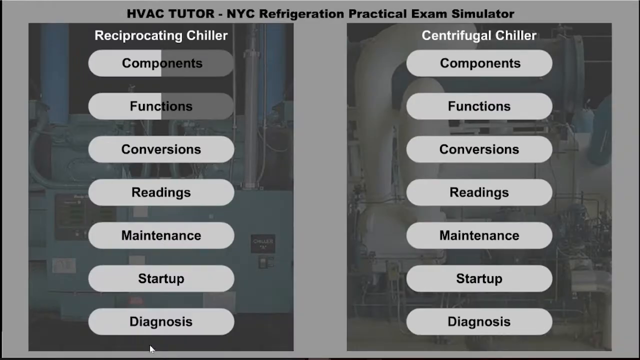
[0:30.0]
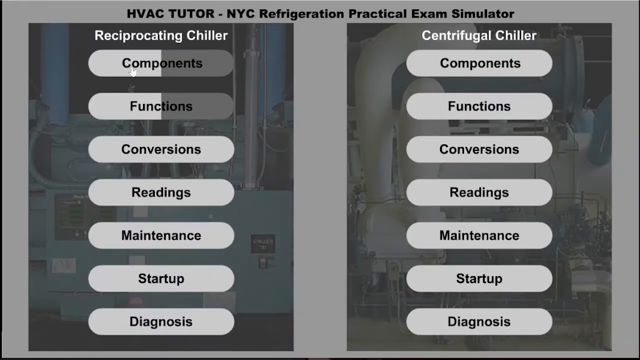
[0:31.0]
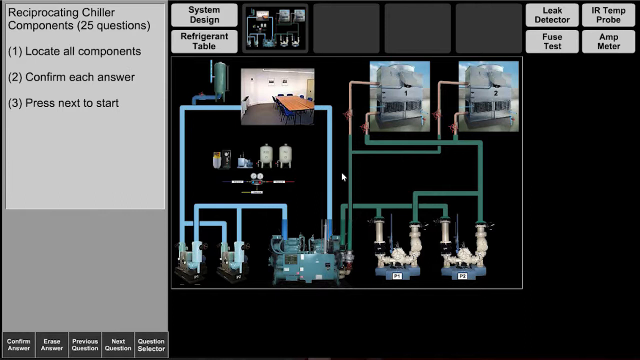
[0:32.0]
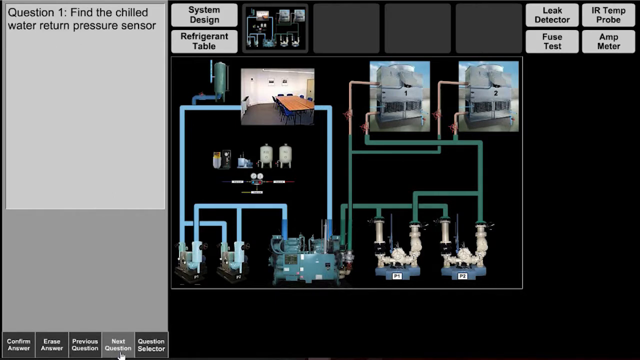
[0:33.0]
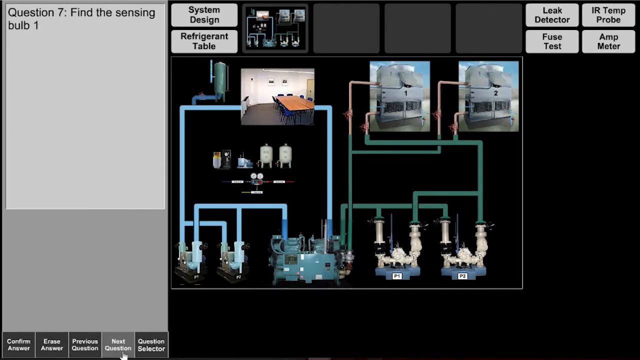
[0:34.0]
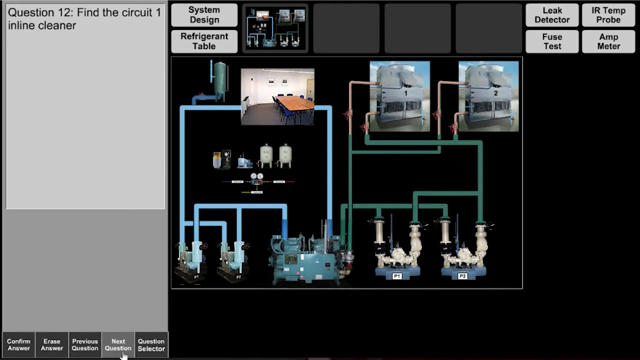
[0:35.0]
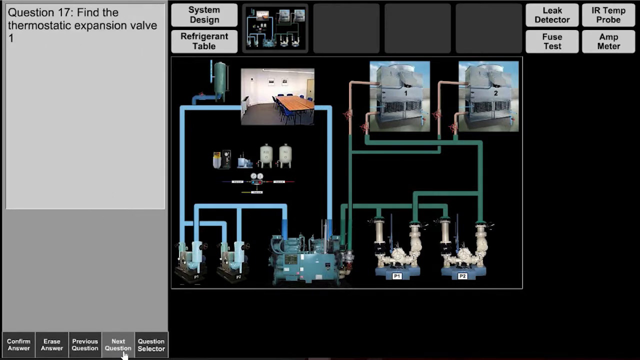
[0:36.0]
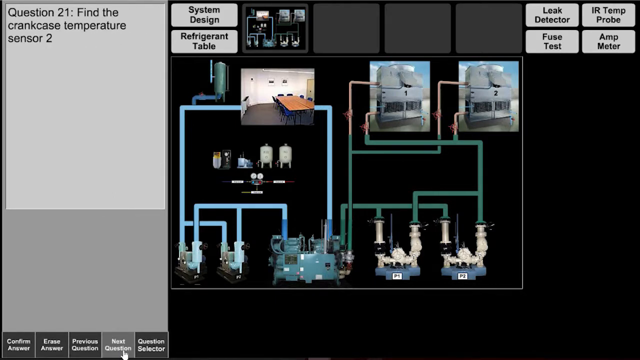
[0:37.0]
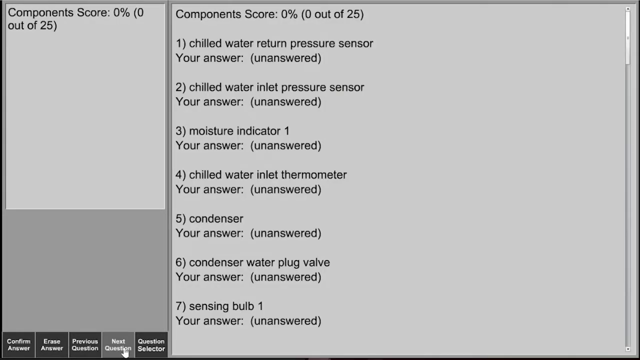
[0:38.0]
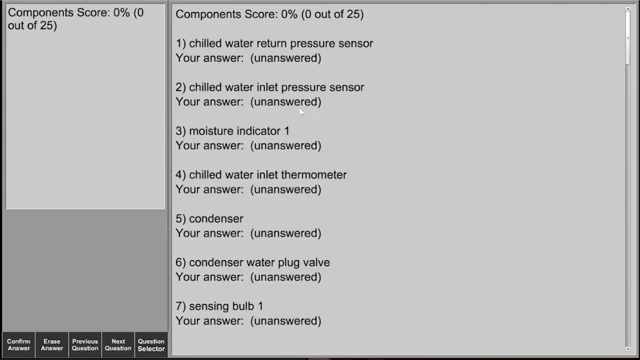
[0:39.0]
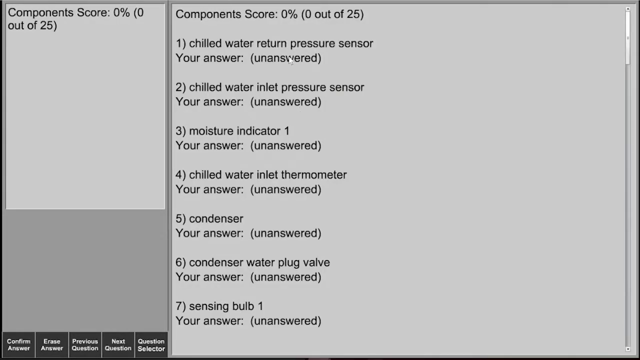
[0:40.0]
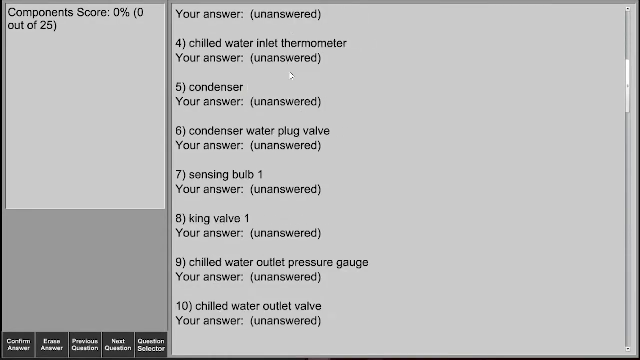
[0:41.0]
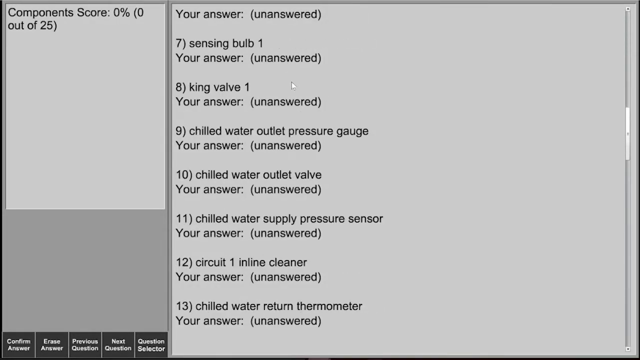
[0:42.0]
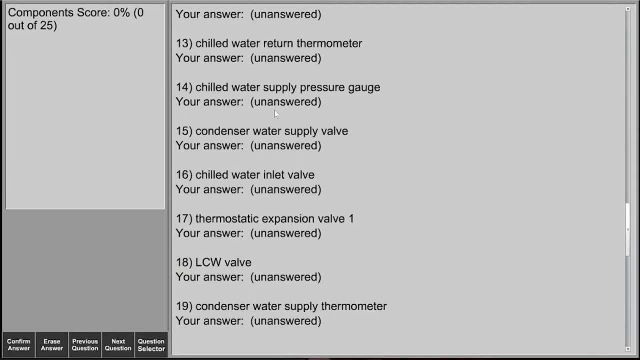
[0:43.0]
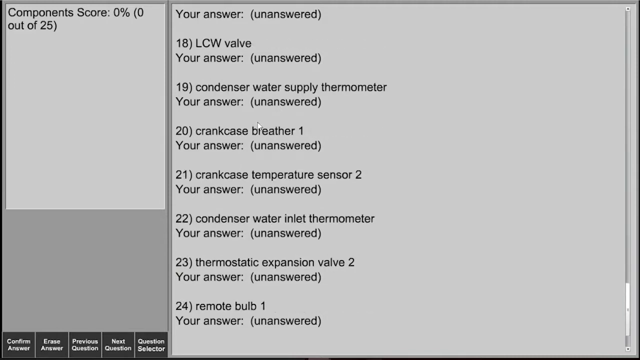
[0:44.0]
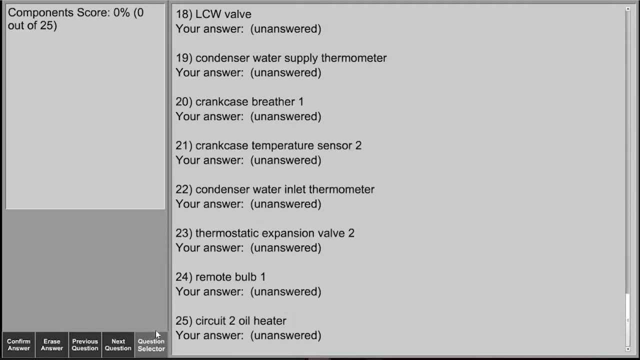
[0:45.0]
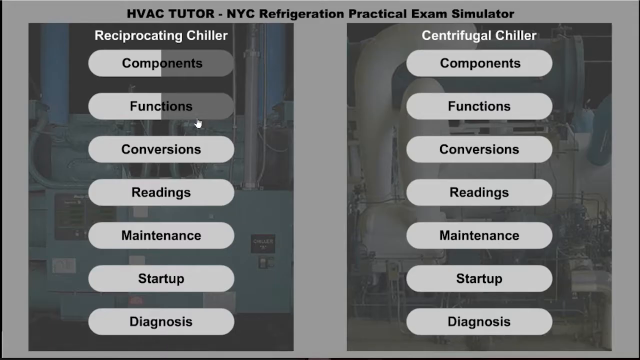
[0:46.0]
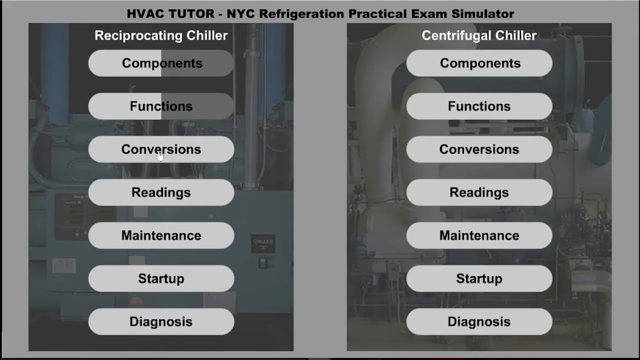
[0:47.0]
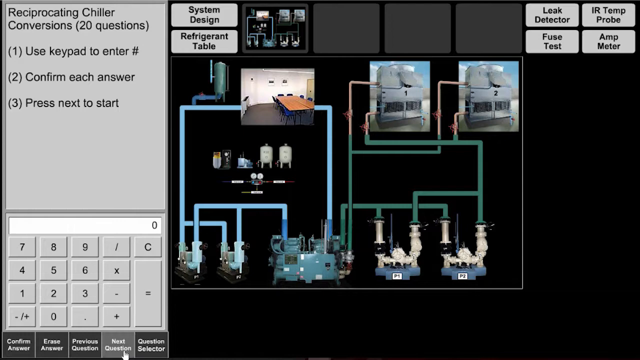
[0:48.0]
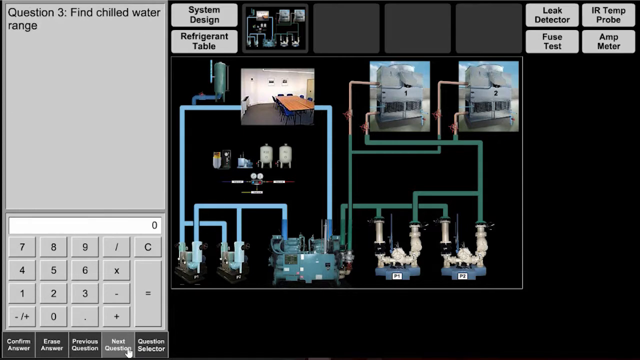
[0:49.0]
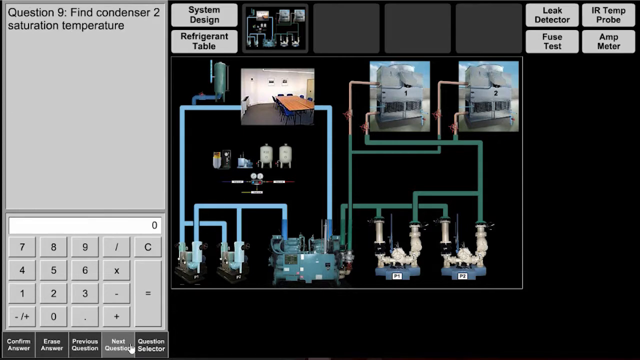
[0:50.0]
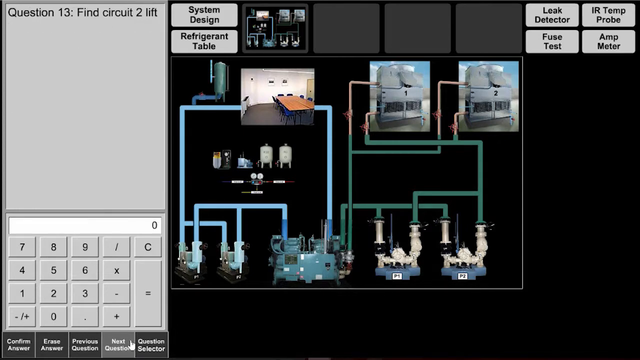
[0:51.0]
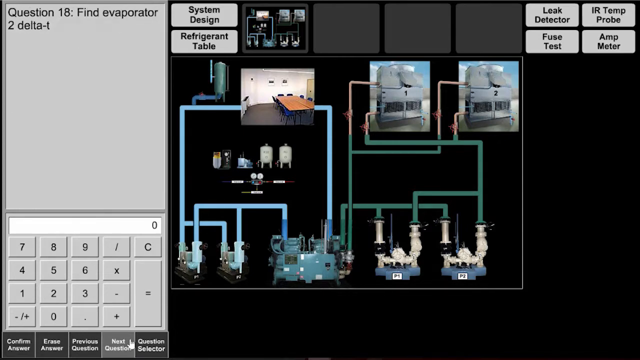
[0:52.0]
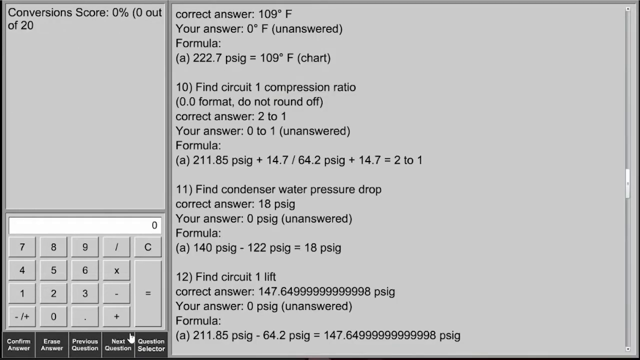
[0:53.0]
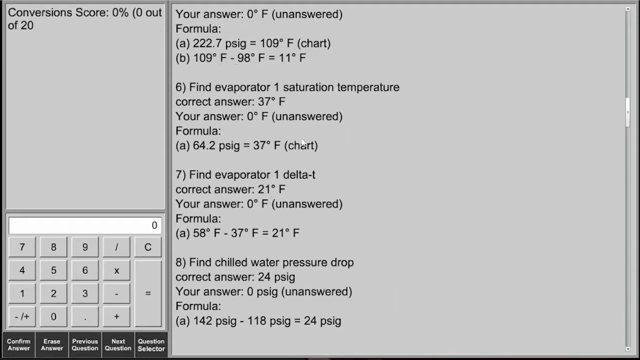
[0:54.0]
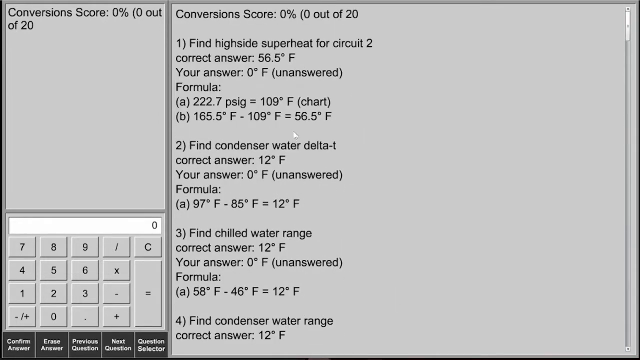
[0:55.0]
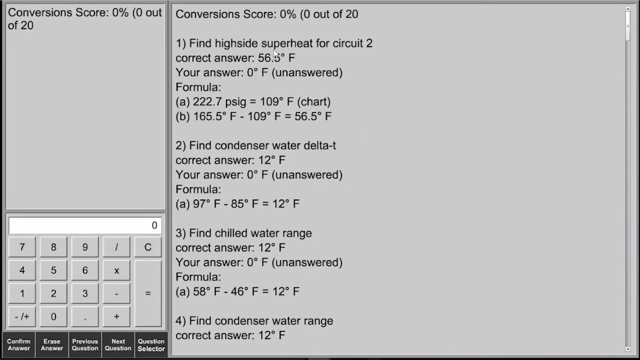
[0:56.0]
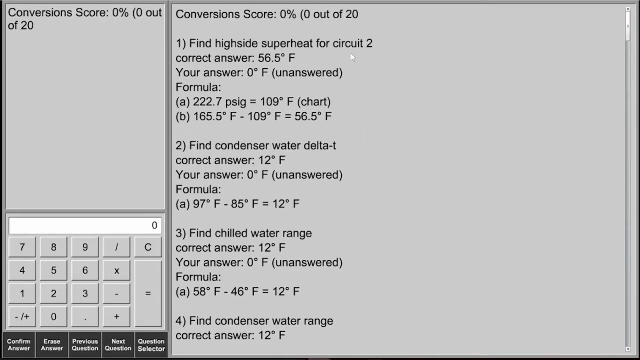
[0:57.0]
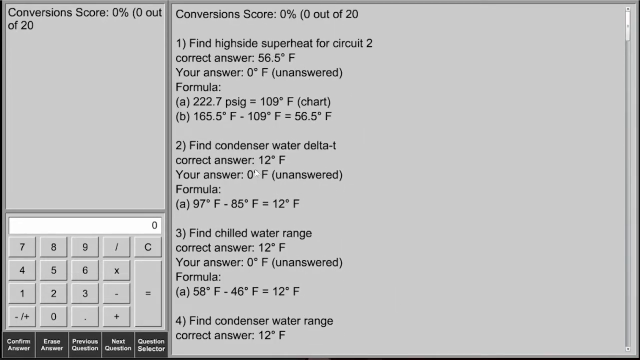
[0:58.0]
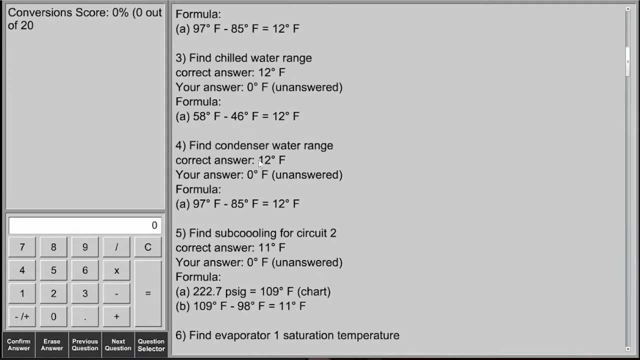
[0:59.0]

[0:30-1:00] A two-column screen is shown, with "HVAC tutor - NYC refrigeration, practical exam simulator" at the top. The left column lists items under the title "reciprocating chiller": components function, conversions, readings, maintenance, startup, diagnosis and so on. Components and functions is half finished, while the rest show incomplete. The right column shows "Centrifugal chiller" with the same buttons, also showing as incomplete. The user clicks the components button under Reciprocating Chiller and scrolls through 25 questions. The Components score then appears as "0% (0 out of 25)", and the user scrolls down the score display to the bottom. The video then returns to the main view. The user clicks Conversions, which opens with instructions for 20 questions to be answered. The user scrolls through the questions, and a calculator is below them. In the right window, a display of the process appears, as in the Components view, and after scrolling all the way through it shows 0%, 0 out of 20. The user scrolls up through the questions.